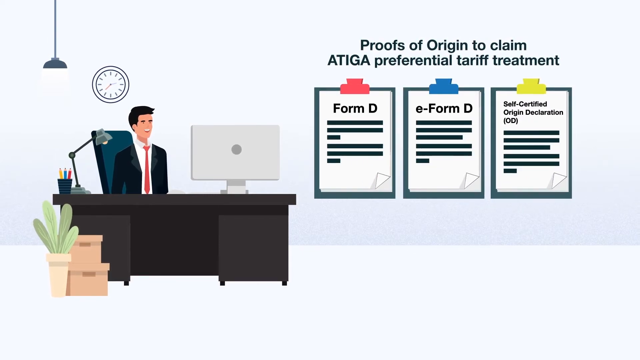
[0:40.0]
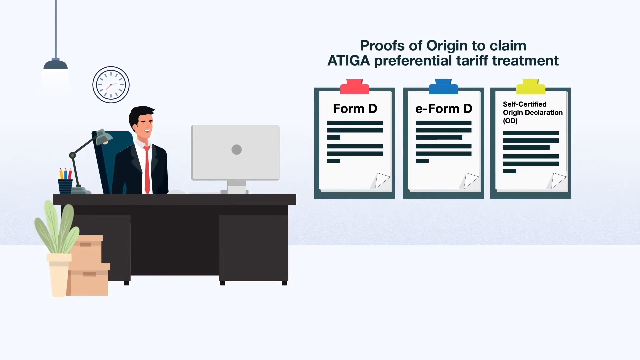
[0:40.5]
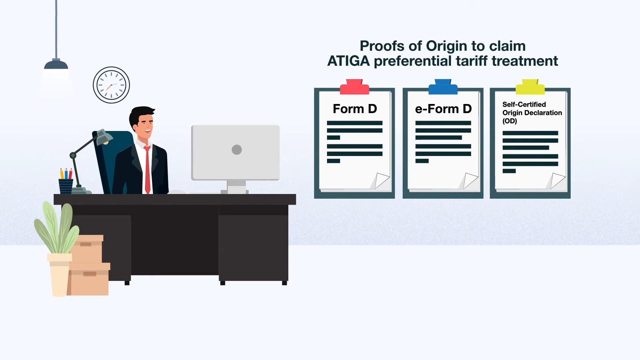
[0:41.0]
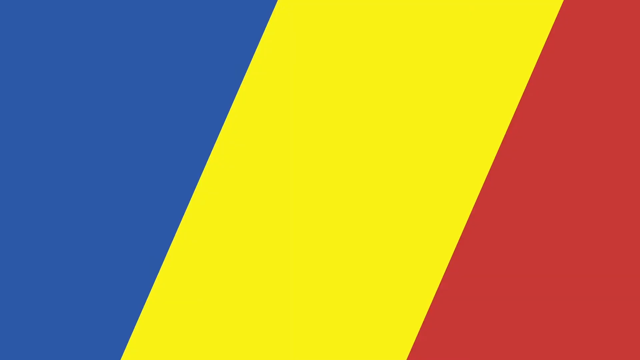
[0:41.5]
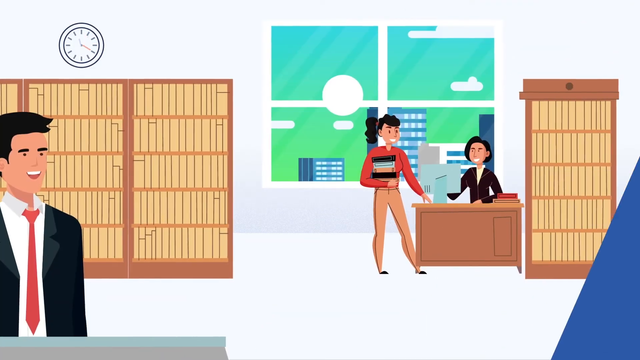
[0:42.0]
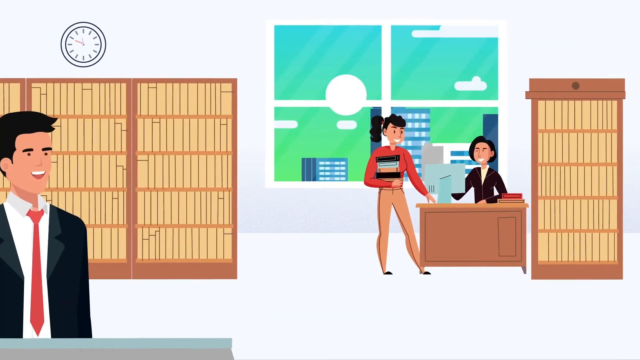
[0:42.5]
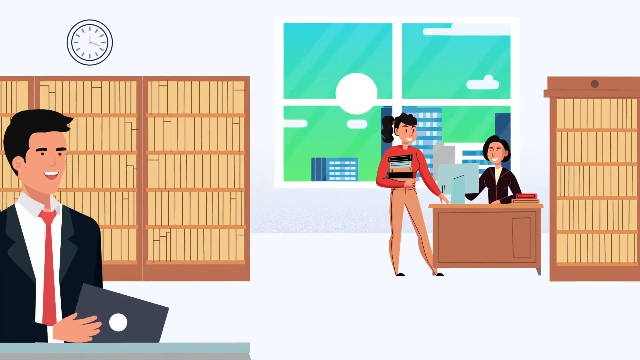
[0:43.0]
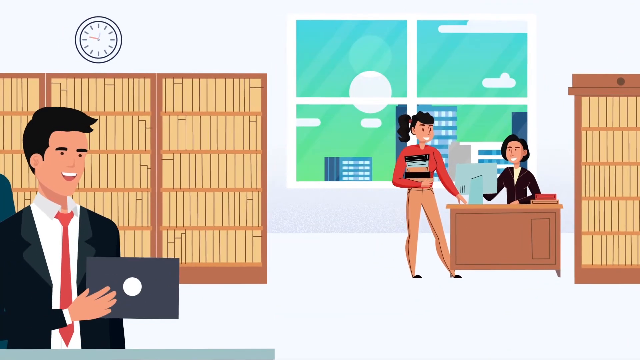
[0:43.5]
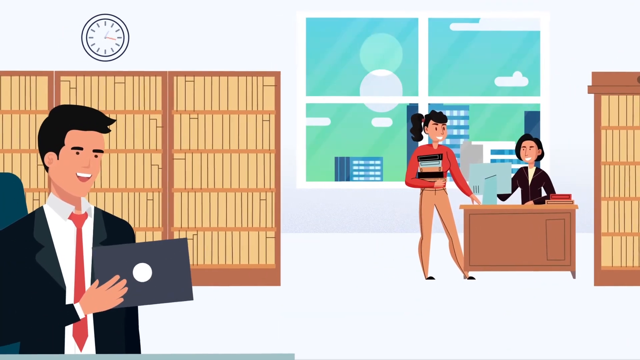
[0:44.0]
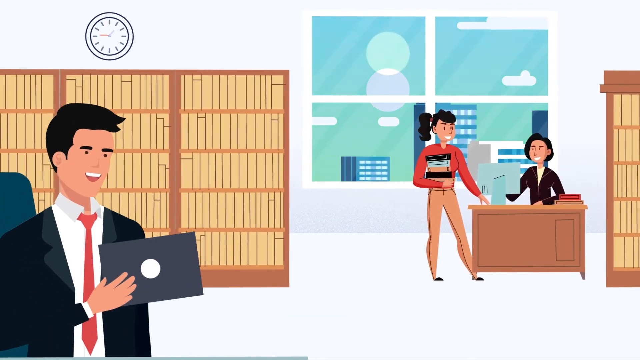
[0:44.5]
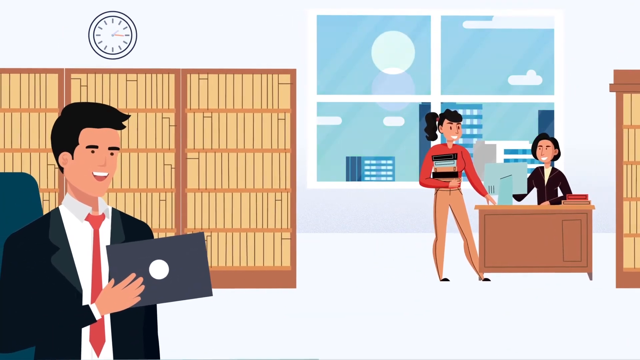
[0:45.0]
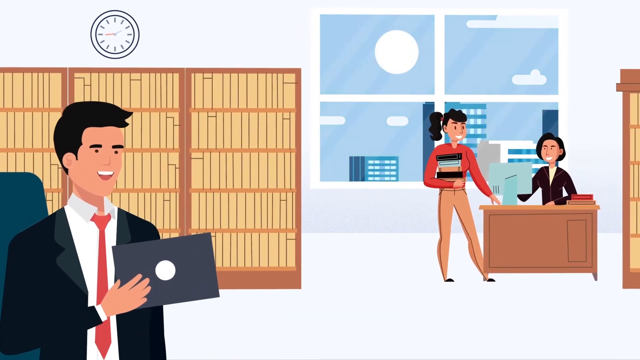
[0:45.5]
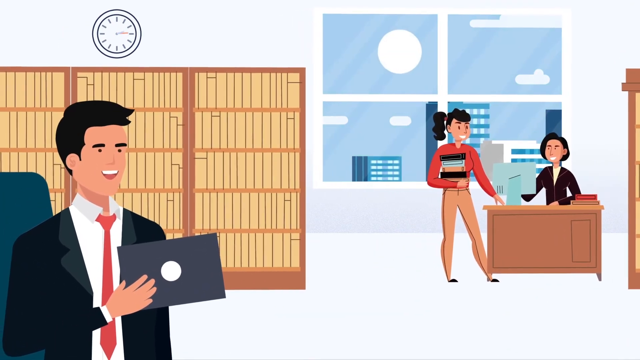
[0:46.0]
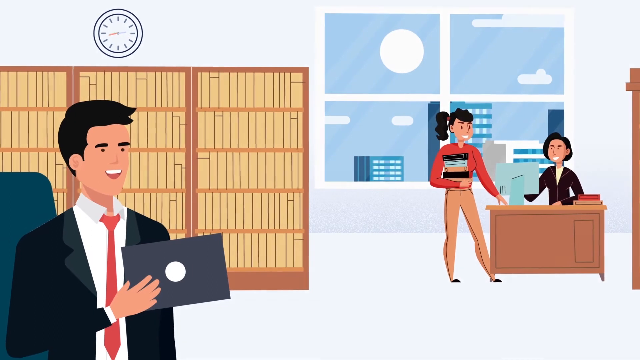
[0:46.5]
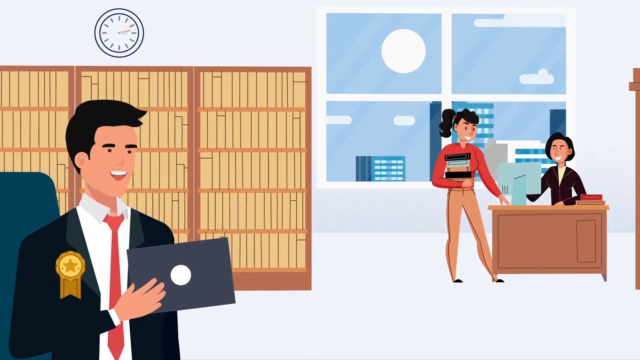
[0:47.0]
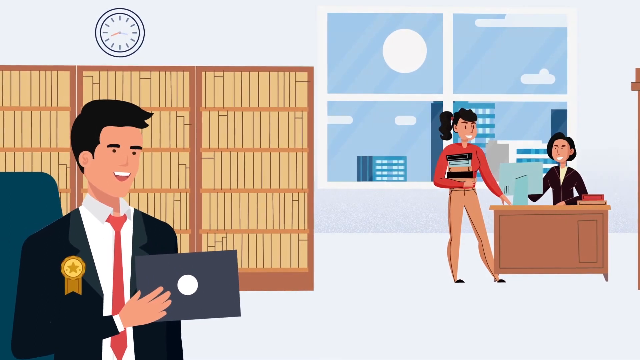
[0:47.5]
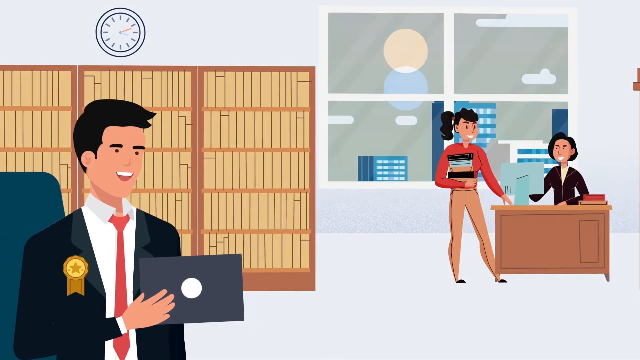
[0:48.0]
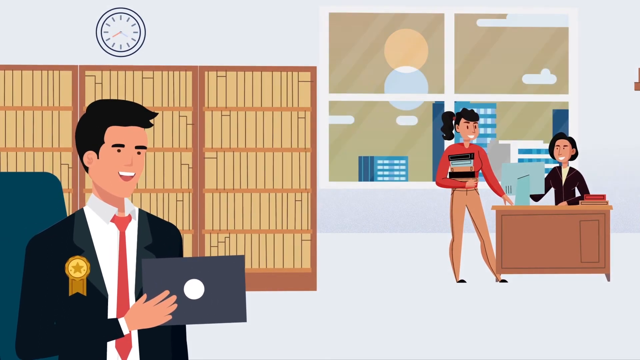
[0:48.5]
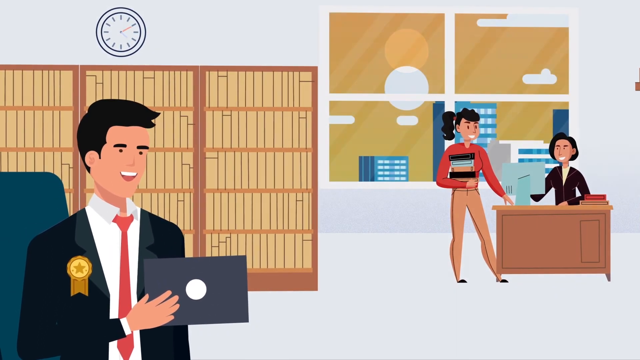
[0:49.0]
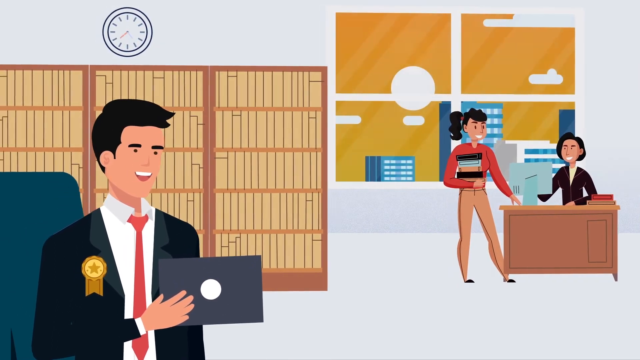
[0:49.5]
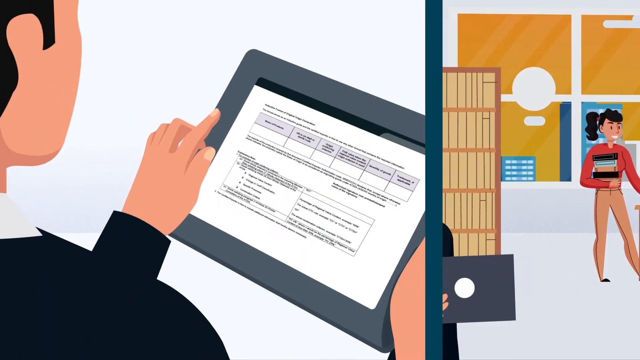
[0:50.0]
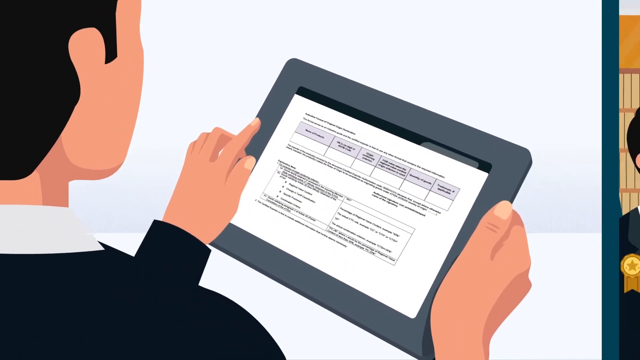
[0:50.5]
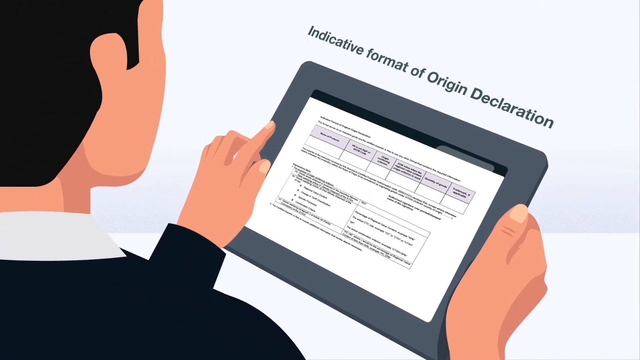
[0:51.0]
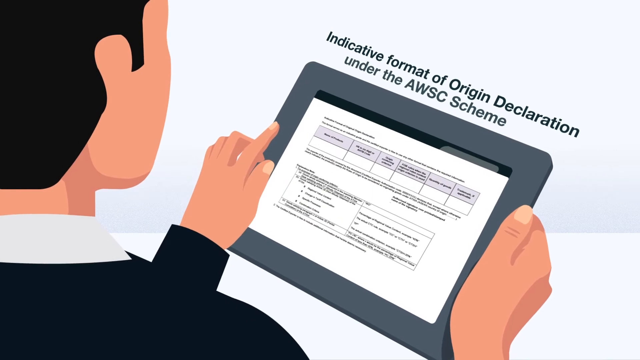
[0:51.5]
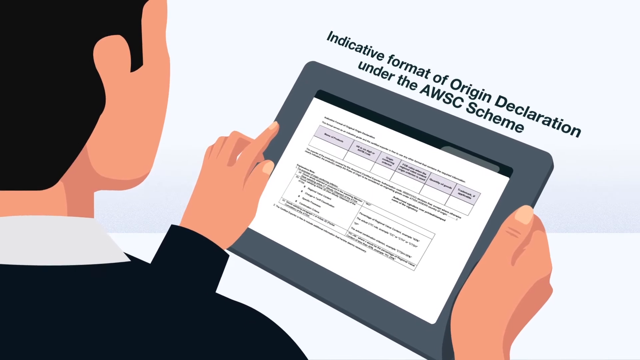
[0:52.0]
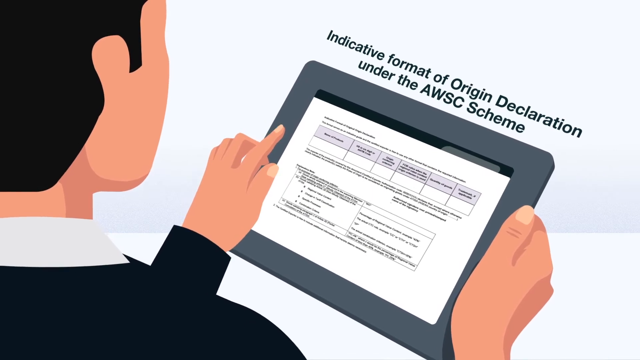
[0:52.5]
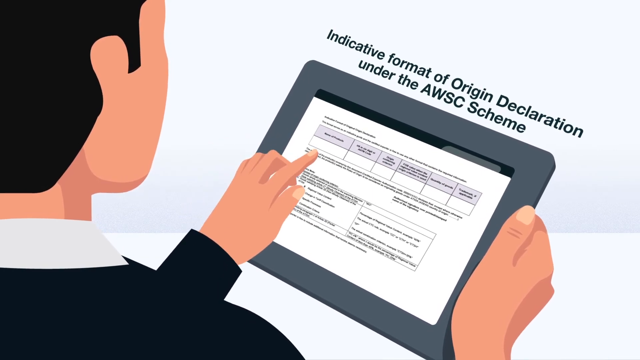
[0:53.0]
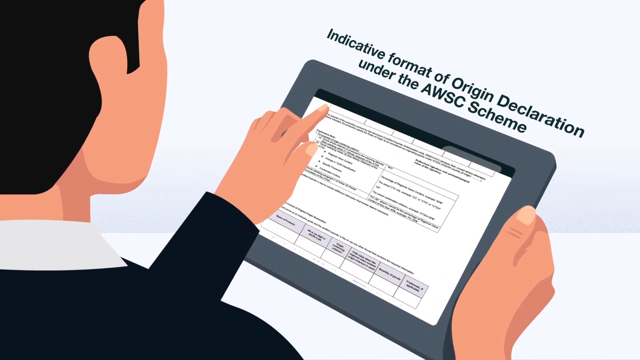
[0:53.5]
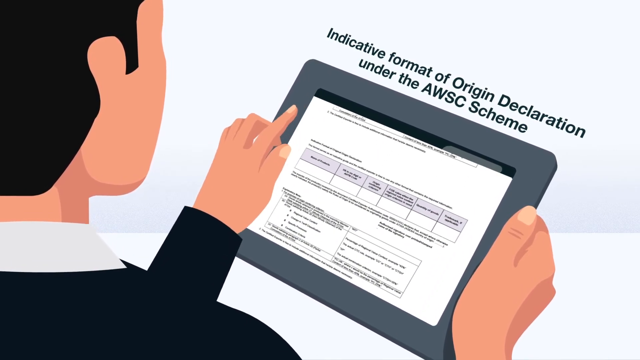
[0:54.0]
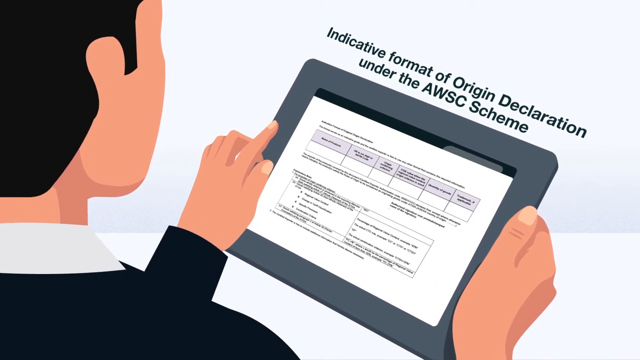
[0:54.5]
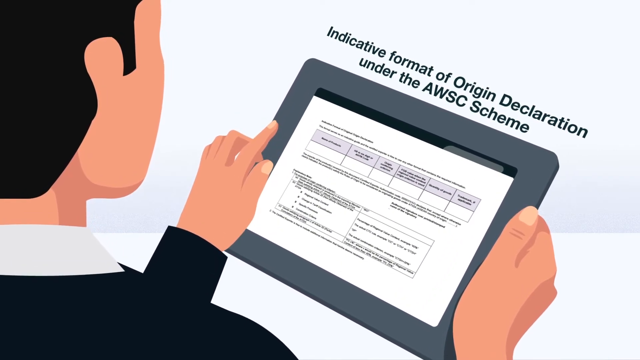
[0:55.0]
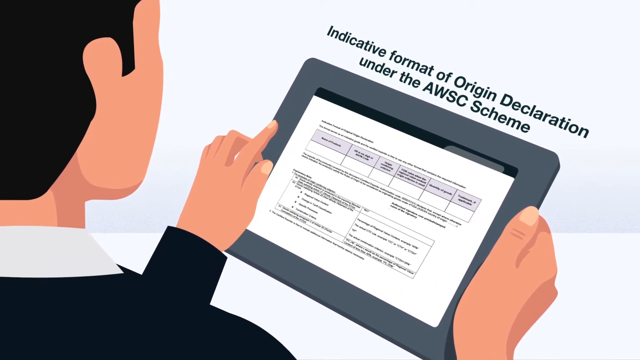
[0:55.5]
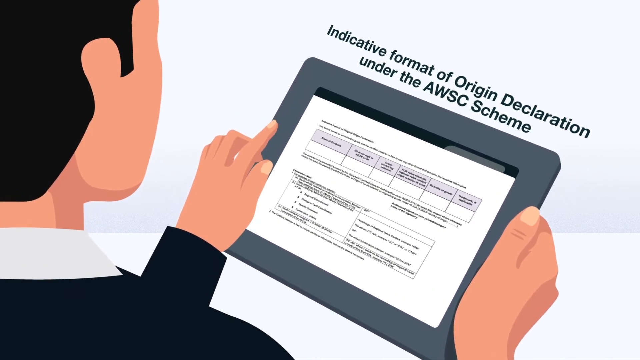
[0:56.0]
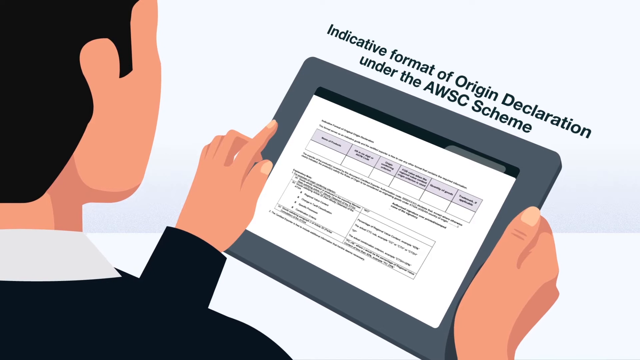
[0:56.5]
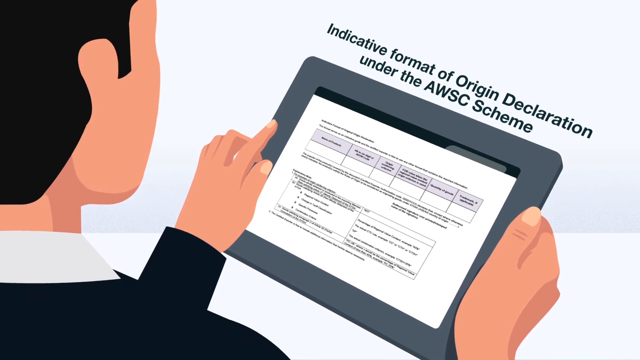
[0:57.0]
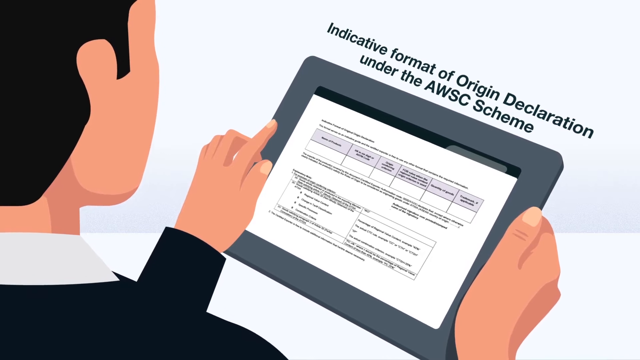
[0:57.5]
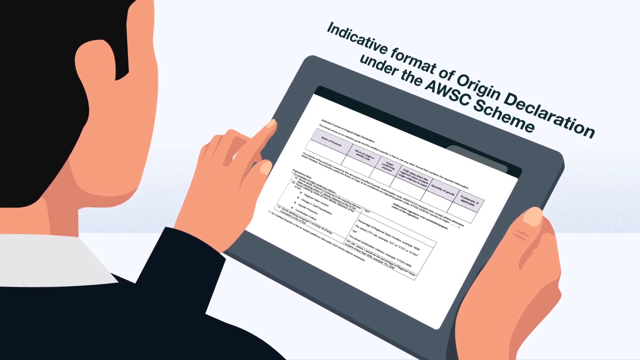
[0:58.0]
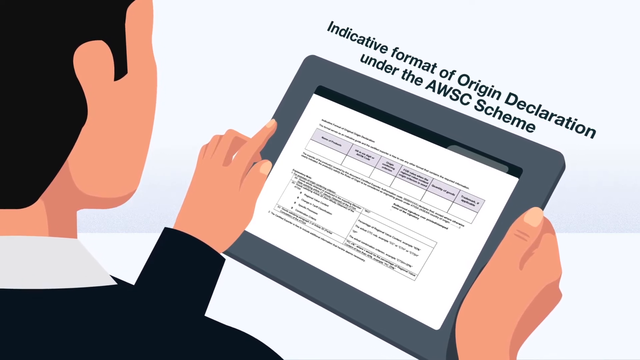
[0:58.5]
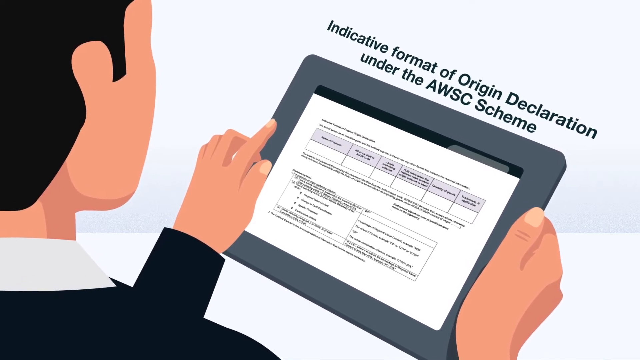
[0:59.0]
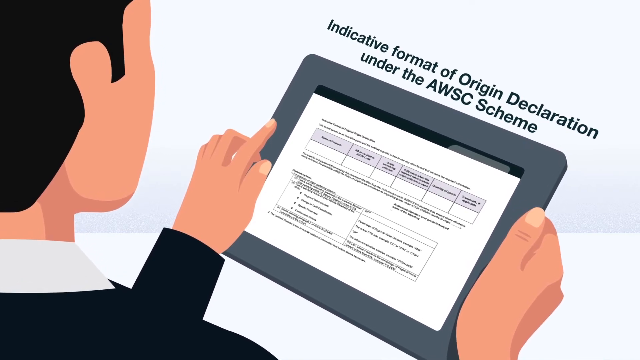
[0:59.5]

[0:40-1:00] The same scene continues, then a color transition leads to an office full of shelves with books. The same formally dressed character appears, with a black bag and a red tie, holding something that seems to be either a tablet or a dark envelope with a white circle in the middle. Further down is an office where a woman is working or writing something on her monitor, while a young woman next to her carries four or five books in her right arm; she is perhaps renting books or study content. A medal appears on her right side. Another transition shows the same character using the tablet, which displays a form about to be filled in, with text above reading "Indicative Format of Origin Declaration under the AWSC Scheme". With a finger of his left hand, he moves the form to explore its content.